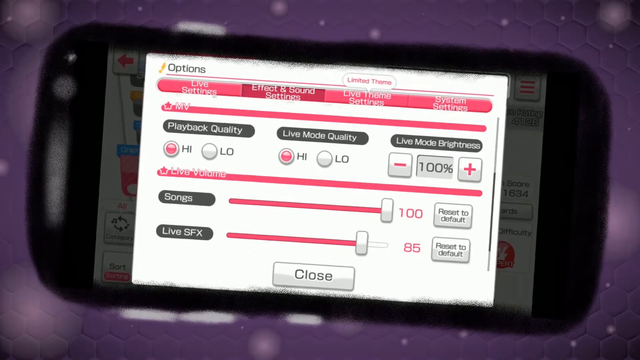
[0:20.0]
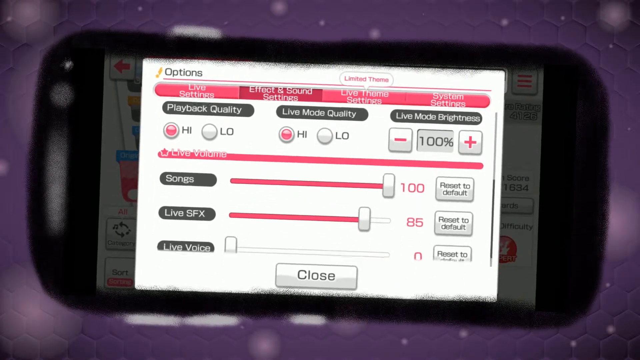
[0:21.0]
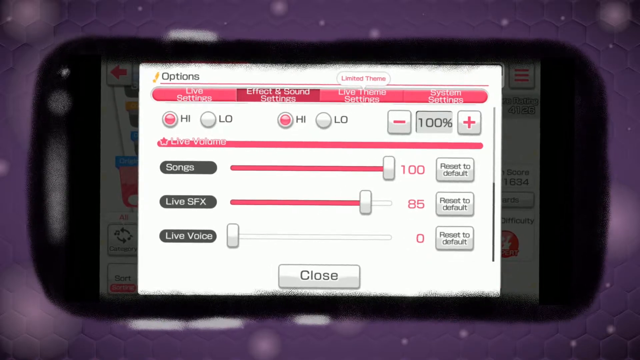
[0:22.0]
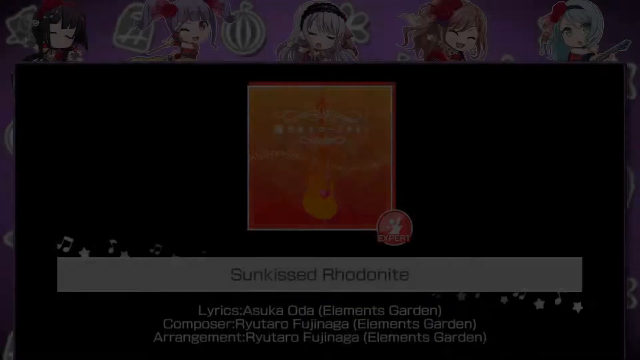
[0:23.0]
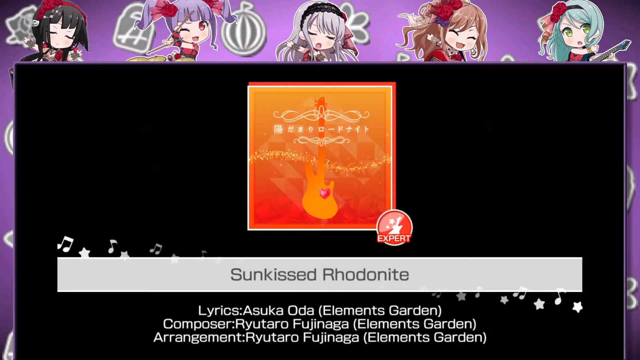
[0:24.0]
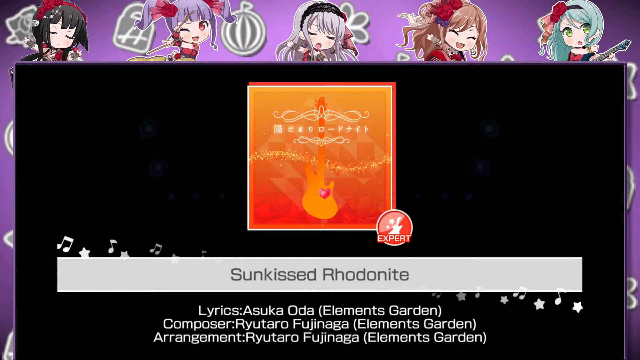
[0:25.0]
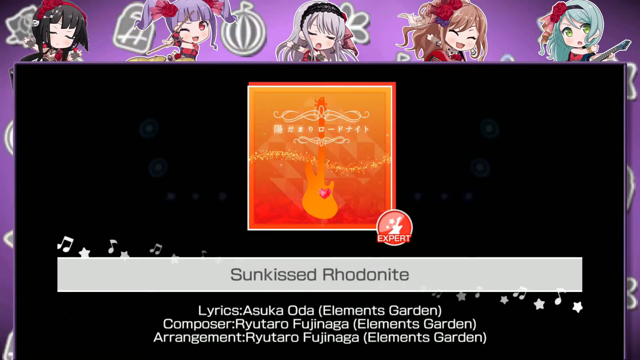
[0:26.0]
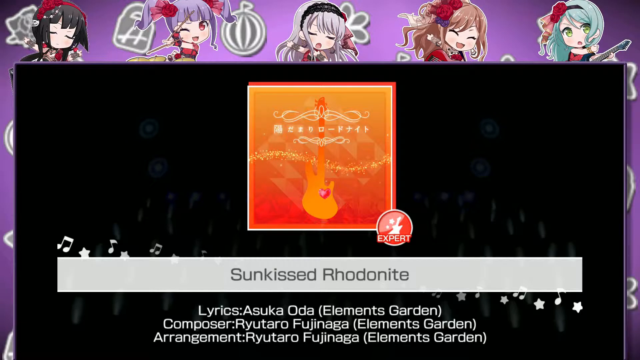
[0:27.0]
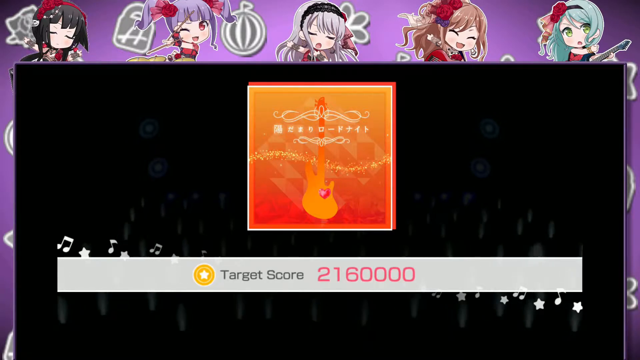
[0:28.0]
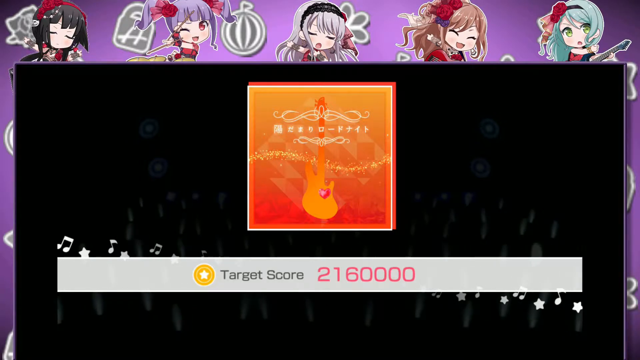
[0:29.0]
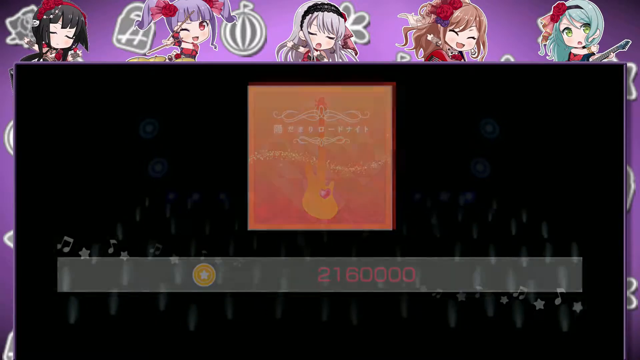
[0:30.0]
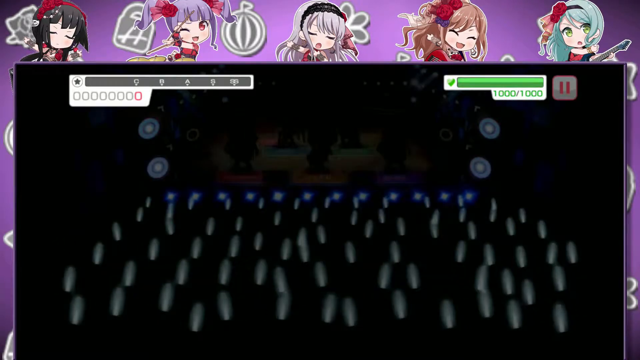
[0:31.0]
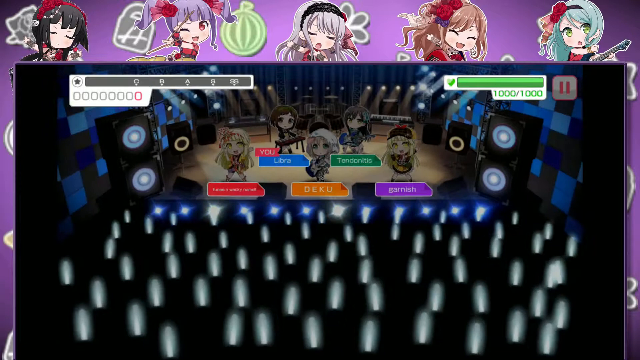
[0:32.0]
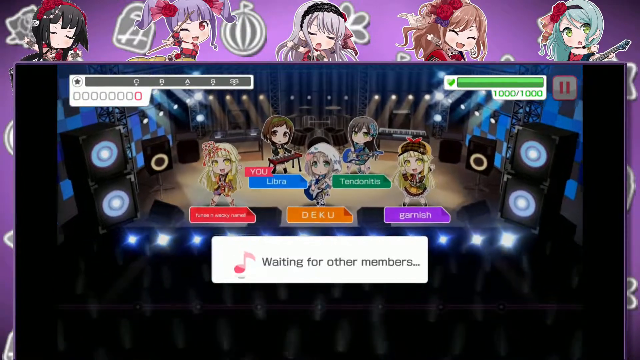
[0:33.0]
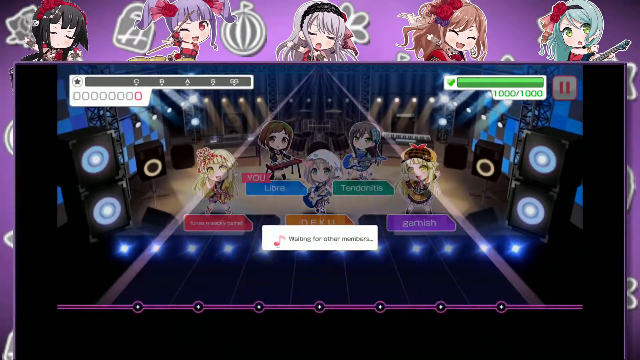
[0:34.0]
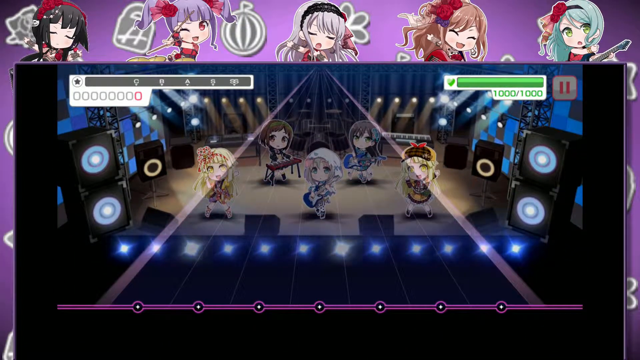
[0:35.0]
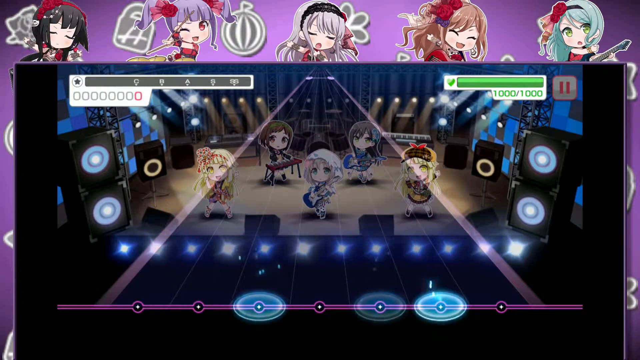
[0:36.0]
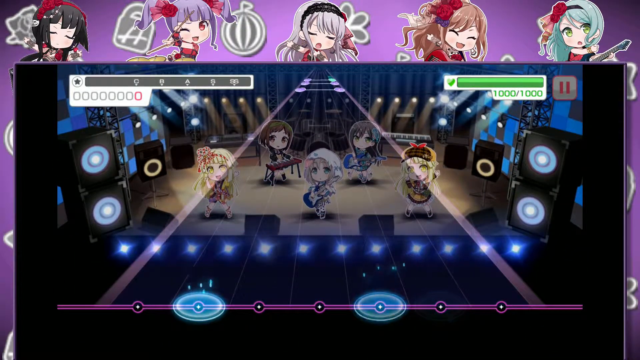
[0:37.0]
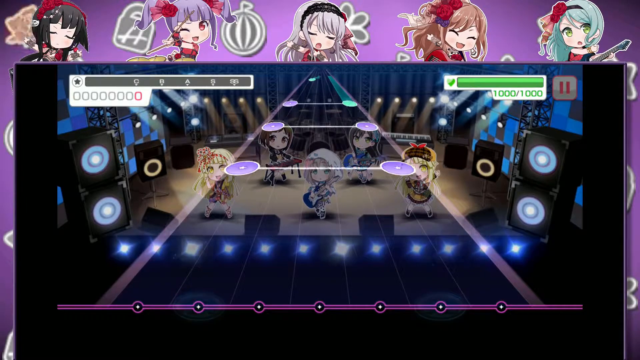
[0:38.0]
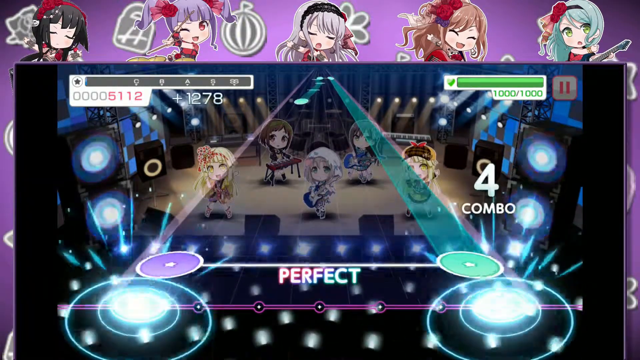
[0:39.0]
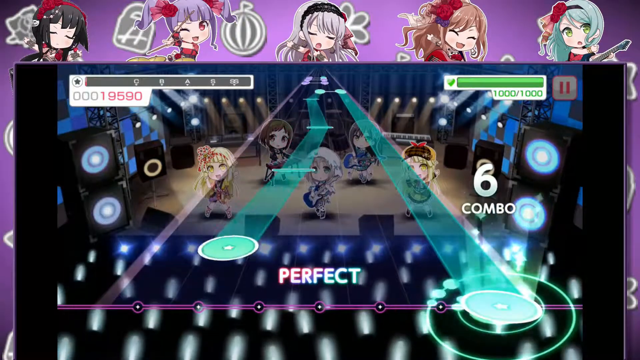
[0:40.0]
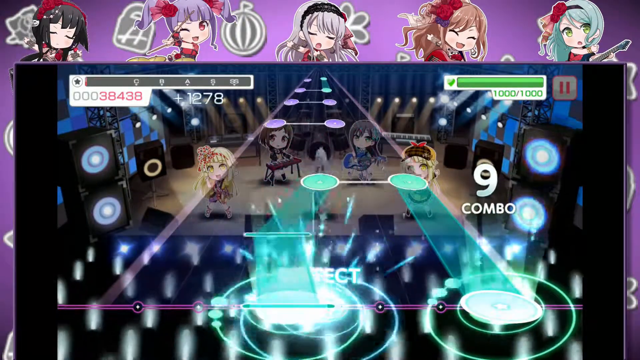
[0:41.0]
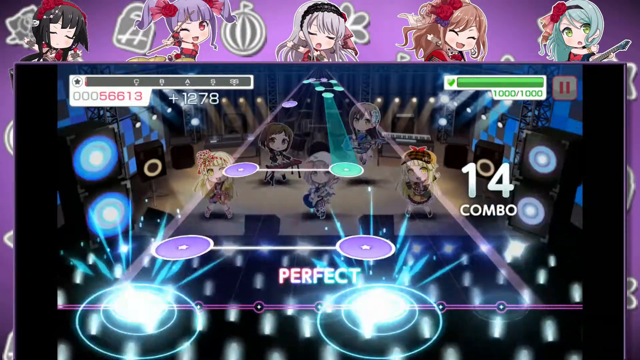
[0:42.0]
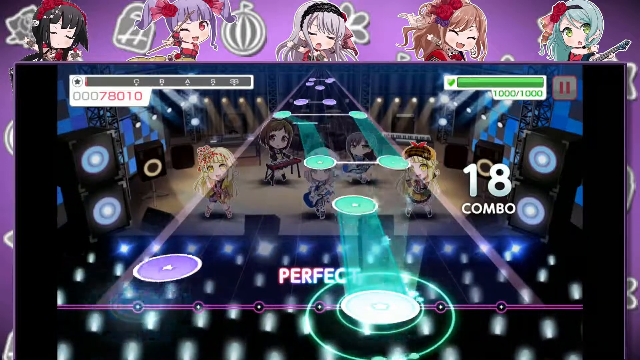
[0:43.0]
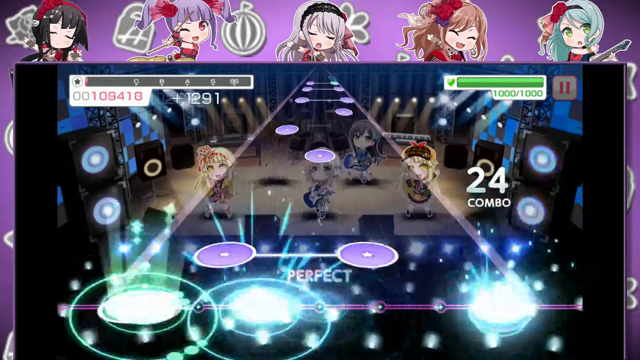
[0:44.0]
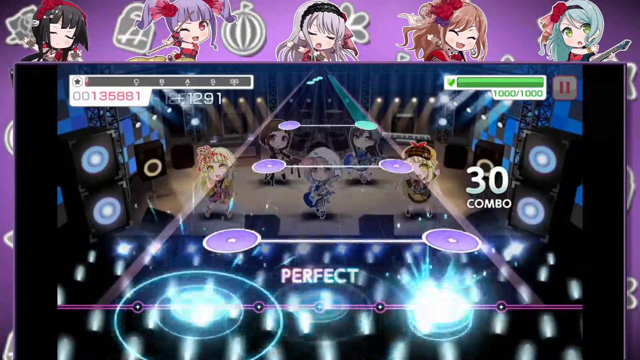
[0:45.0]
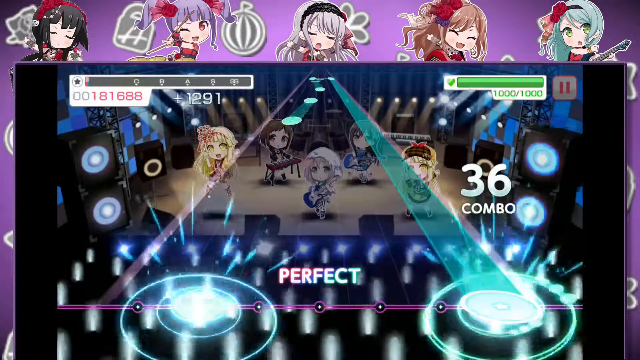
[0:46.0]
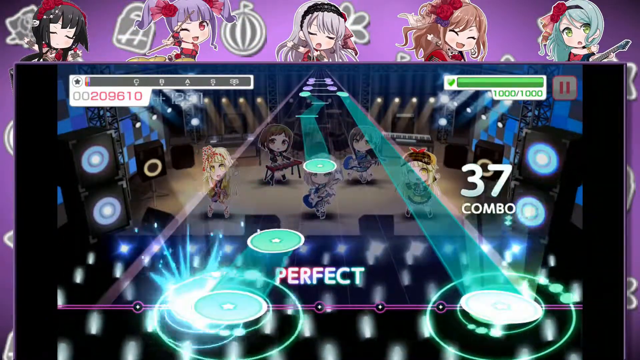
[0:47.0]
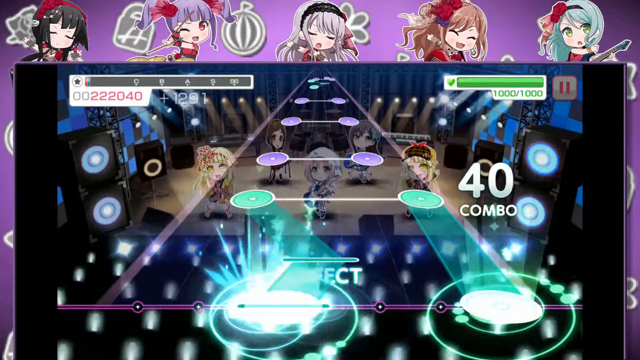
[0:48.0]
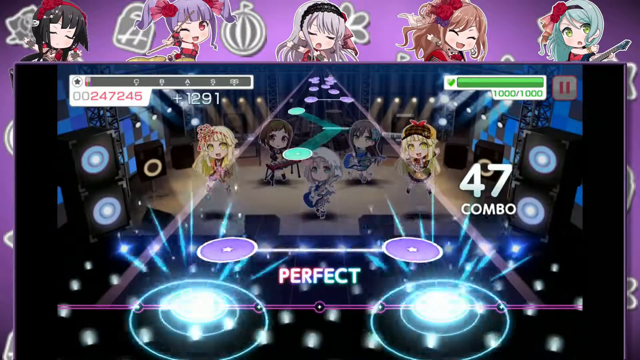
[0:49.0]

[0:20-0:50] The handheld game is in its effect and sound settings, scrolling down through the different settings available to the player. It fades to black and shows what looks like a track from the game. The track is called Sun-Kissed Rodonite, with lyrics by Azuka Oda, Element Garden, composition by Ryutaro Fujinaga, Element Garden, and arrangement by Ryutaro Fujinaga. The song's logo looks like an orange guitar with some Japanese lettering above it. Above it are five anime girls with different hairstyles, each associated with a different musical instrument. The screen then shifts to the target score, 2,160,000 points, and fades to what looks like the start of a concert with a band of anime girls in the background. Names seem to be positioned under the girls, and the words "waiting for other member" appear under the band, possibly indicating a multiplayer game. Then something starts coming from a holographic guitar, and the players start playing, hitting perfect combos with the combo number and the score both steadily increasing.